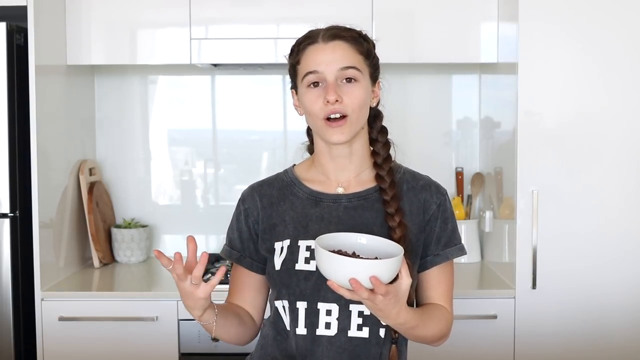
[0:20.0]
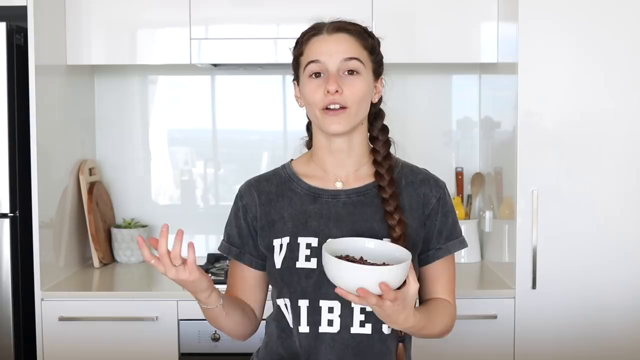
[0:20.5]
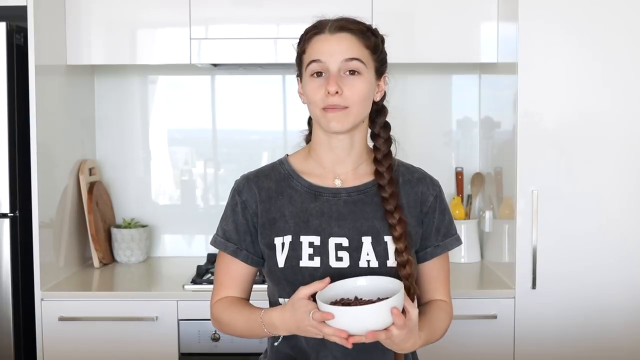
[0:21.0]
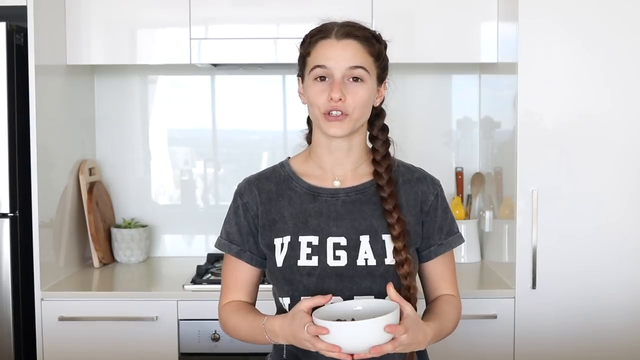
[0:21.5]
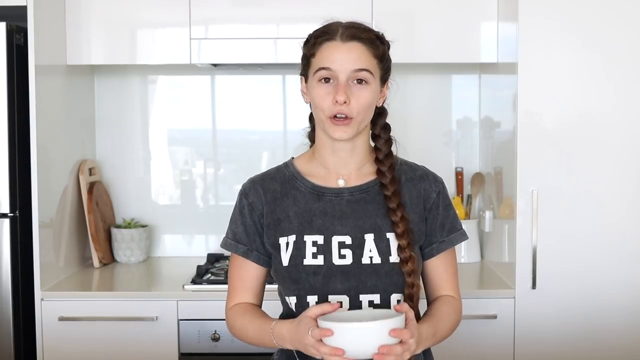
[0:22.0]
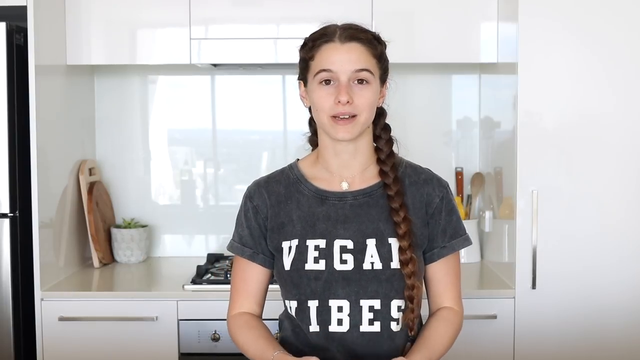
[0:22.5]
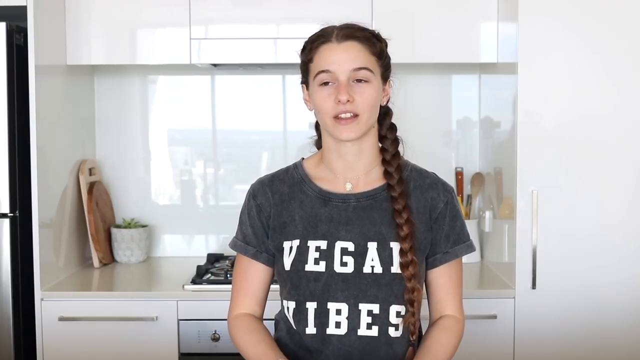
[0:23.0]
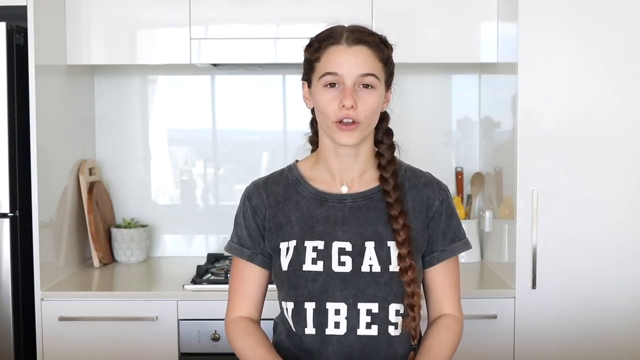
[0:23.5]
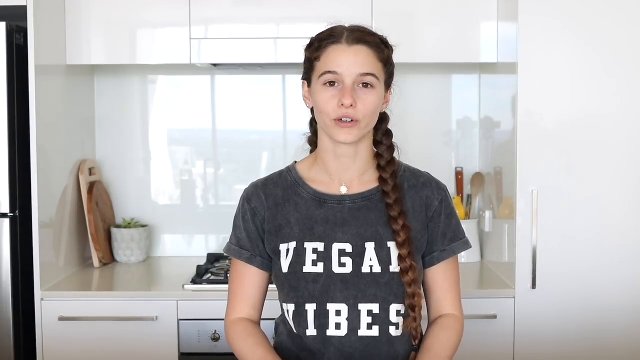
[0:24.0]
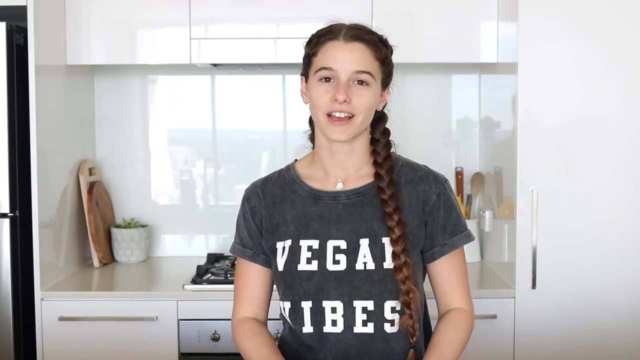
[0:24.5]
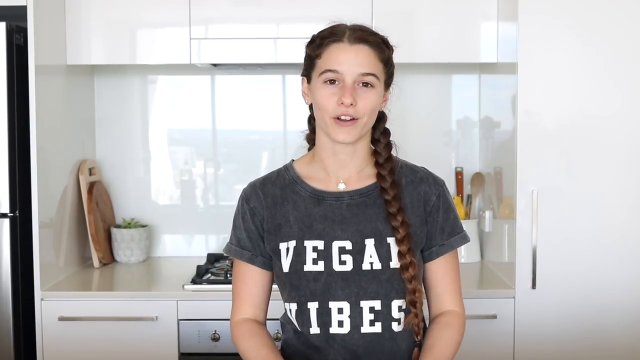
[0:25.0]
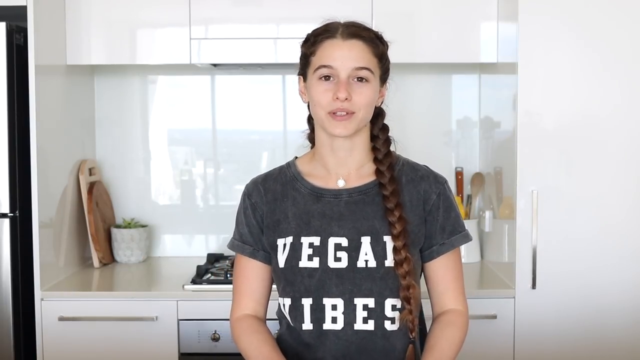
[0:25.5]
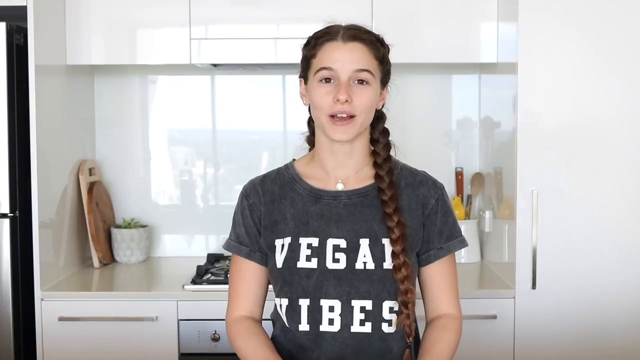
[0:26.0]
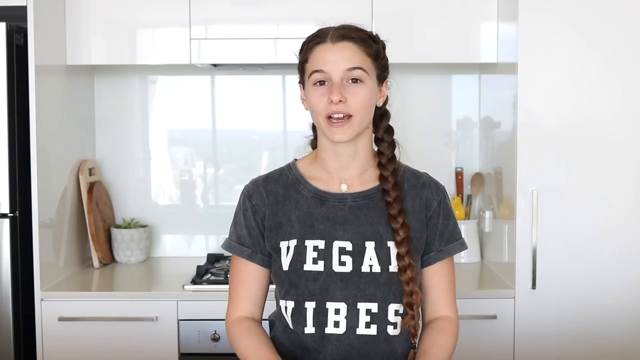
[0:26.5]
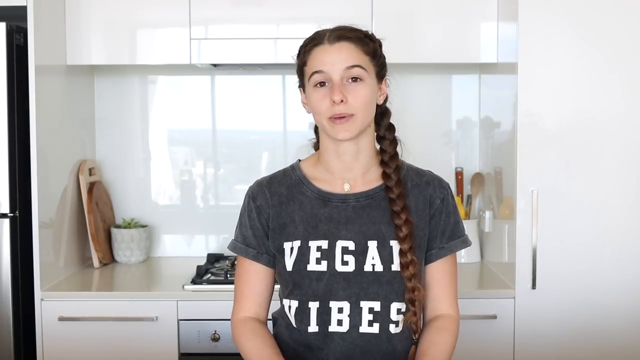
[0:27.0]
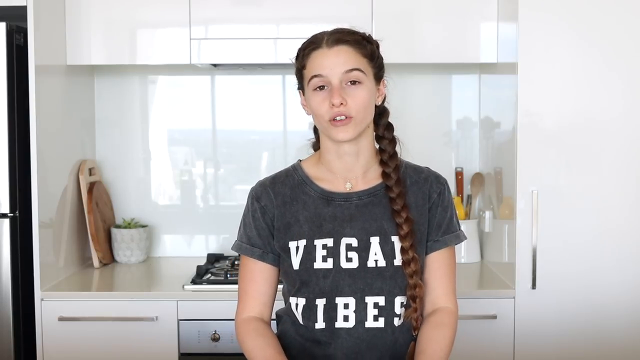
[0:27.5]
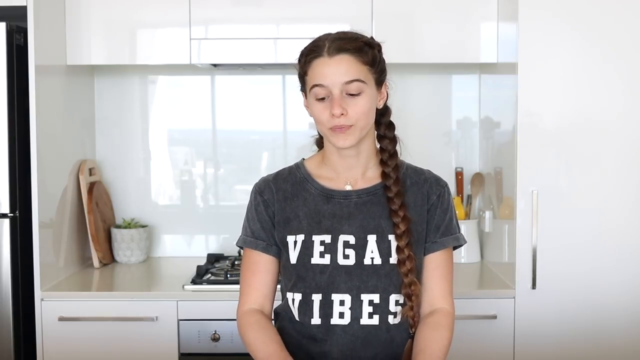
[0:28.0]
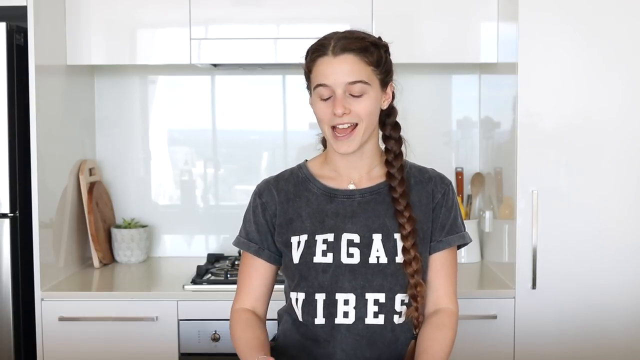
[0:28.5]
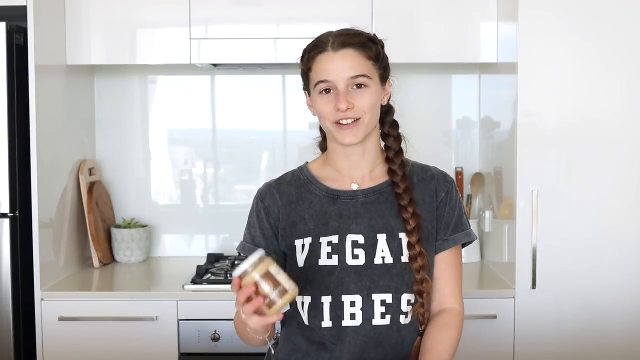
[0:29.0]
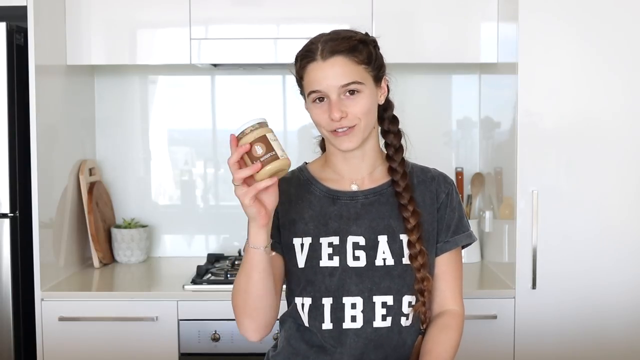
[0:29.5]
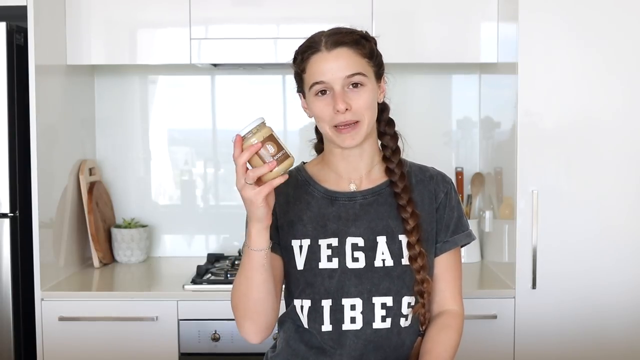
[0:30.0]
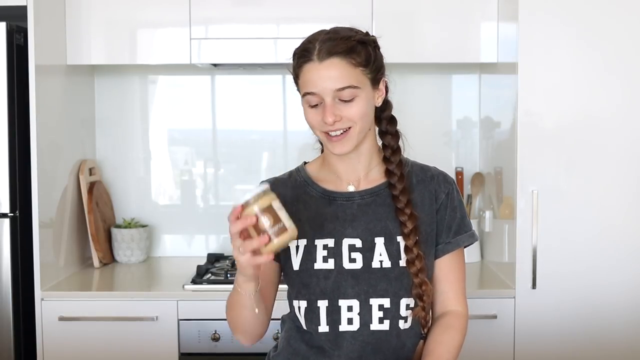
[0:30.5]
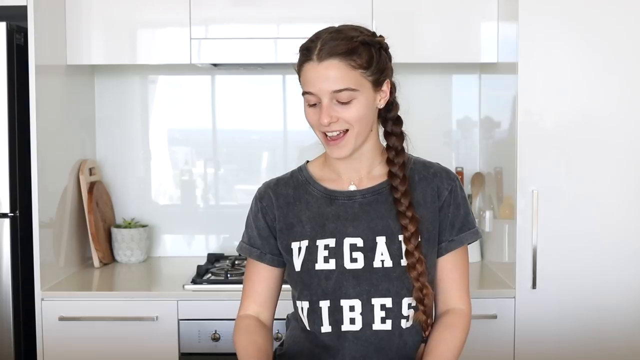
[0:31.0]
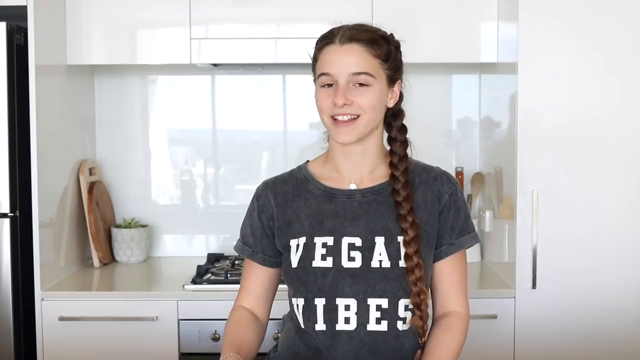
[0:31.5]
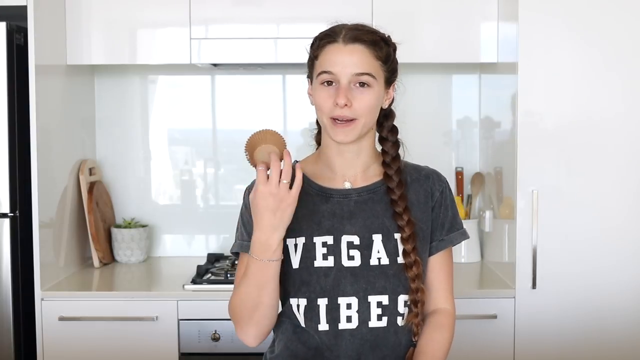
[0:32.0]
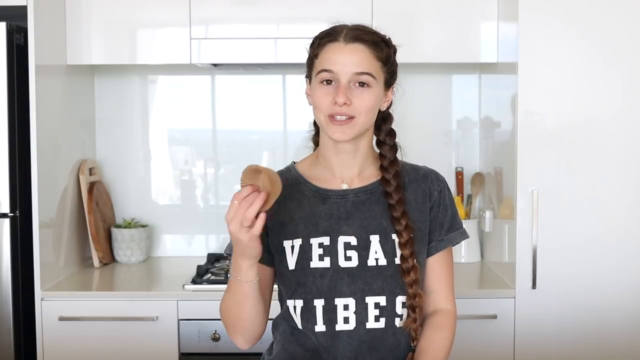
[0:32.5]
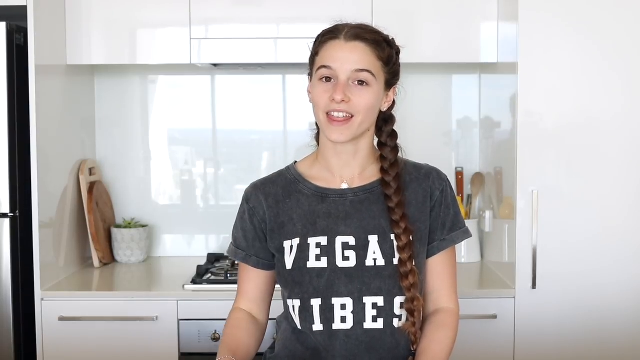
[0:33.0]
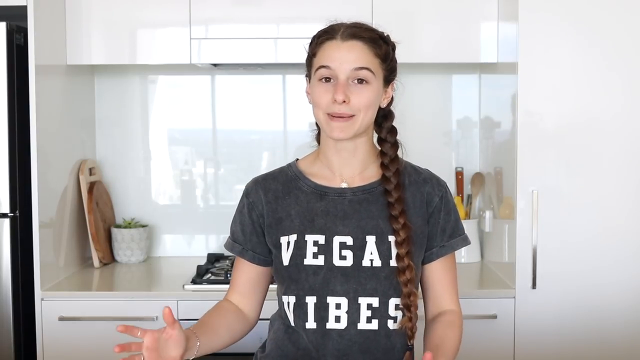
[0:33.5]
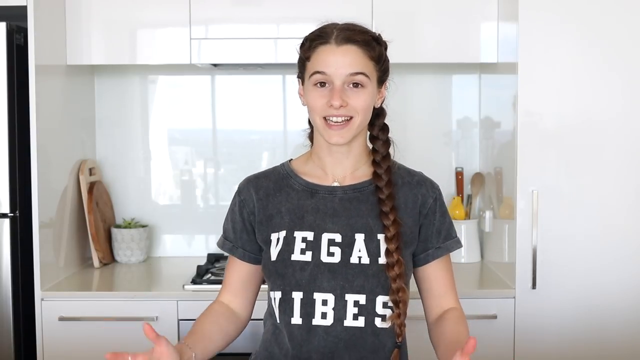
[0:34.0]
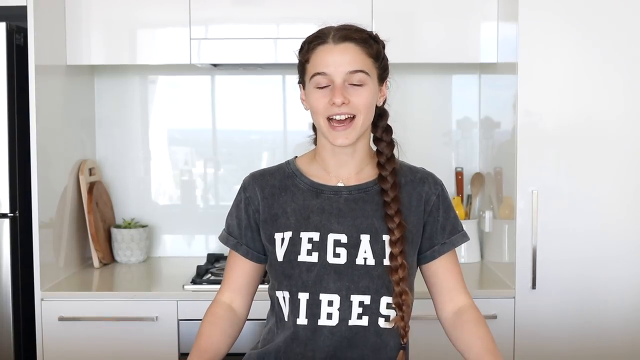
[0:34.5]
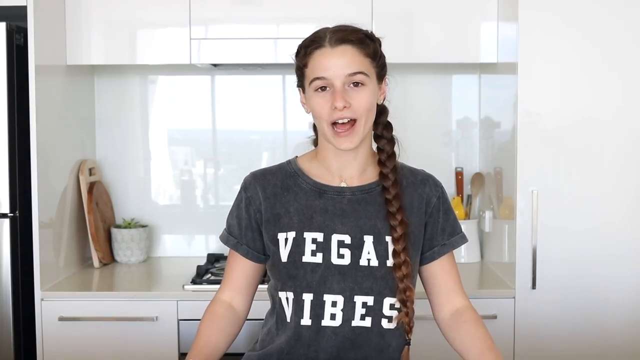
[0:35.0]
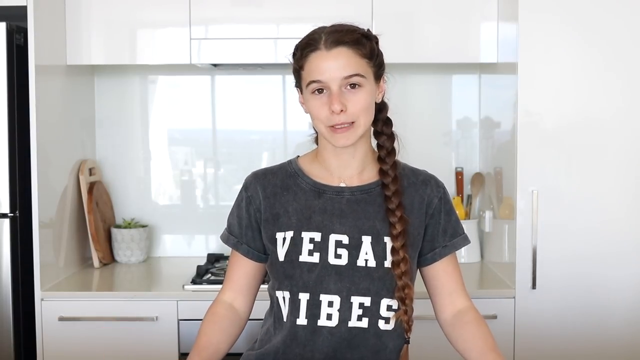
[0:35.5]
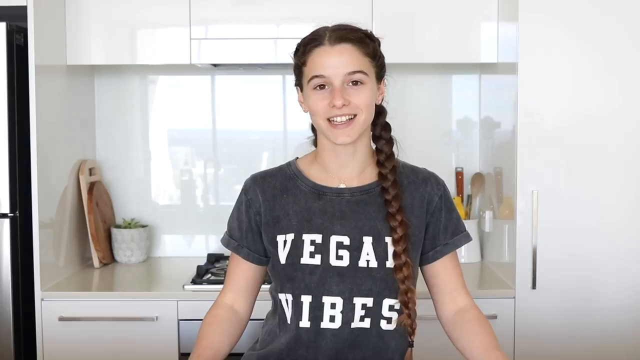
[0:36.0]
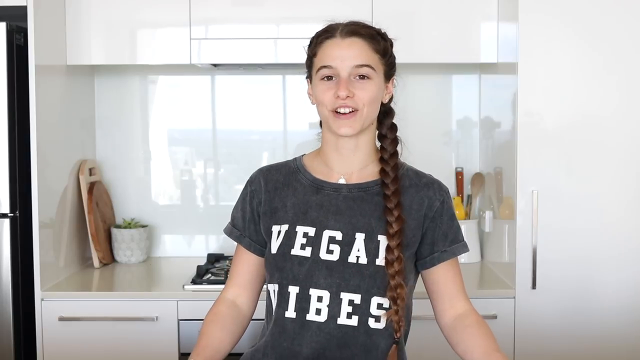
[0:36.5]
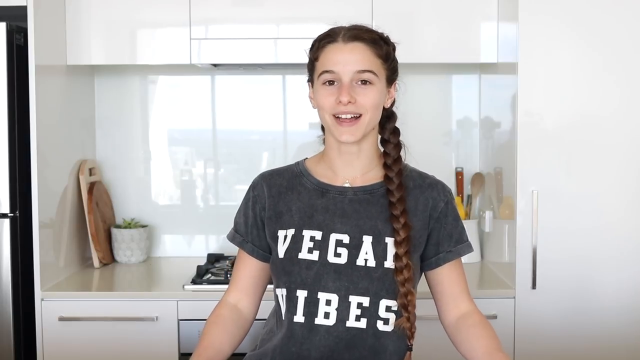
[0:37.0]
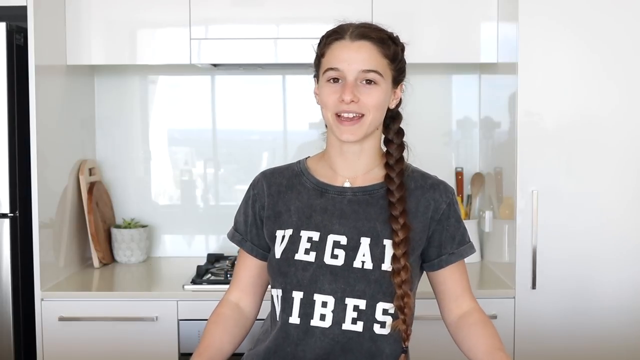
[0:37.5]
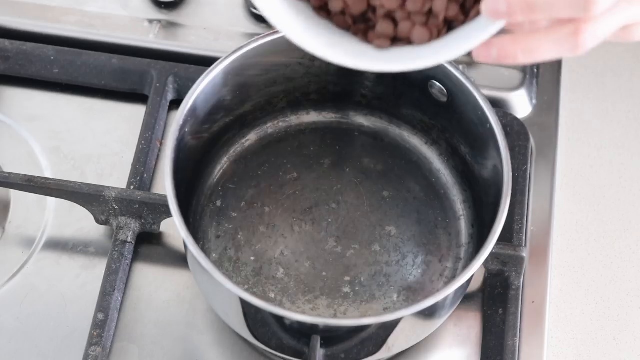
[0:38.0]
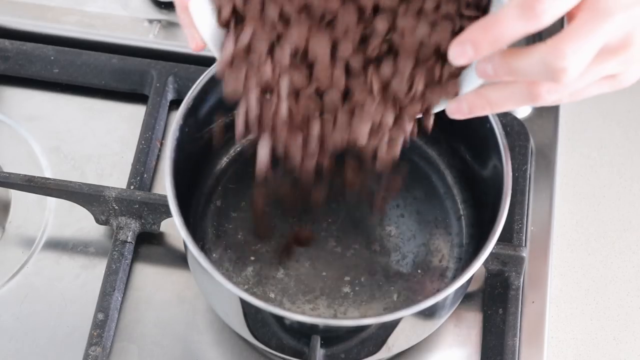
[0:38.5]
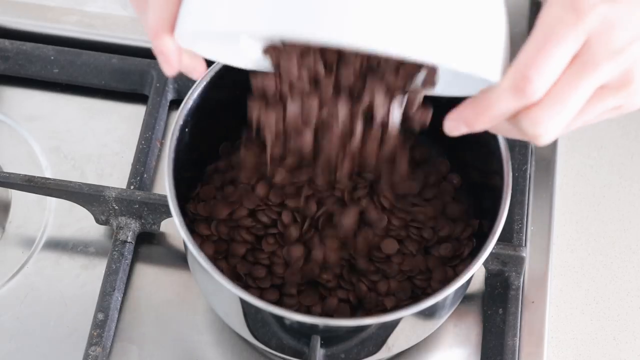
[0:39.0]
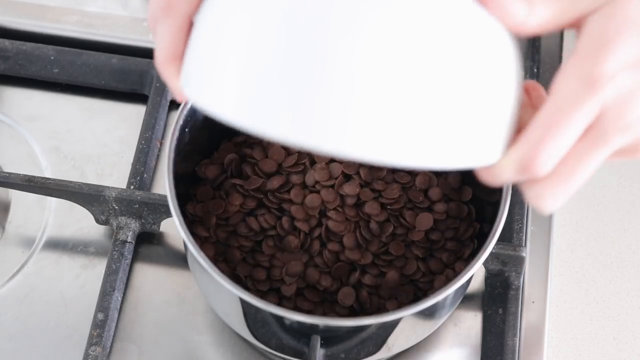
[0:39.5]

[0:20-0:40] The scene is a kitchen with white cabinetry all around. Windows in the background show city buildings blurred by a curtain. An older white teenager with incredibly long black hair in a braid that reaches her stomach, hanging over her left shoulder in the front, wears a gray t-shirt that says "vegan vibes" in white. In her left hand she holds a white bowl of chocolate chips and pieces, and she has a ring on her right index finger. She holds all her fingers open as she speaks, pronouncing her words very clearly and boldly. She picks up a jar of some kind of brown liquid with a brown label and a white straw top. She then picks up an empty cupcake wrapper and places it back on the counter. She moves slightly to the left and right while standing in place, talking to the camera. She dumps the chocolate chips and pieces into a pan, getting ready to cook them to make a chocolate candy cup.